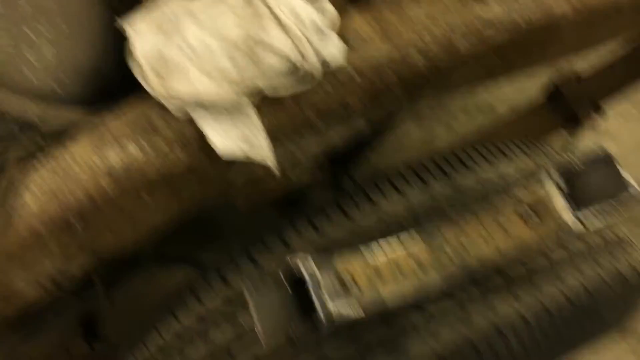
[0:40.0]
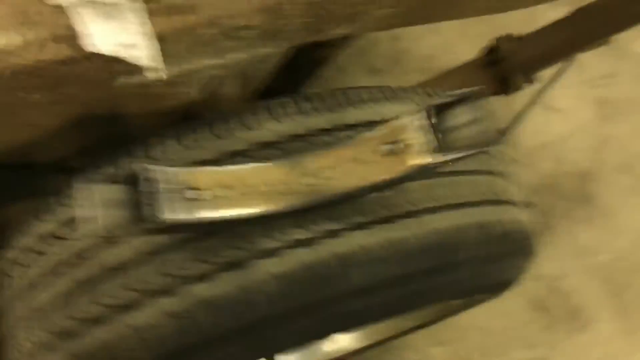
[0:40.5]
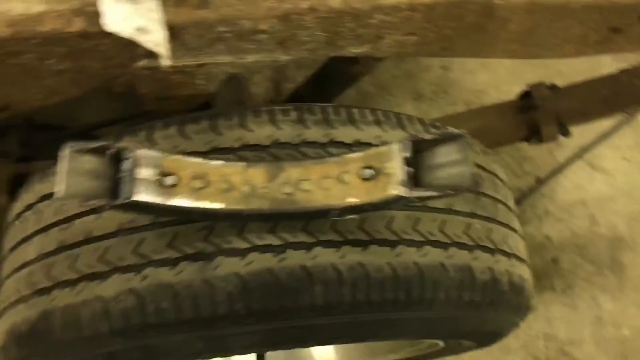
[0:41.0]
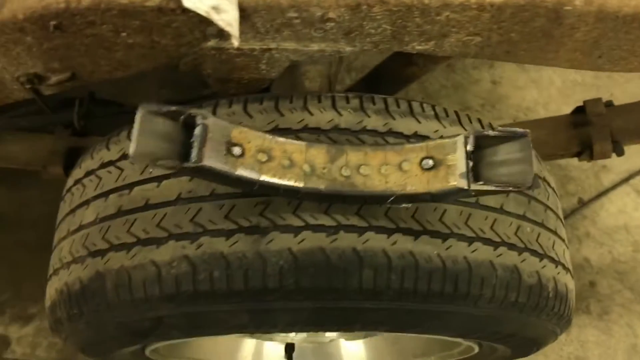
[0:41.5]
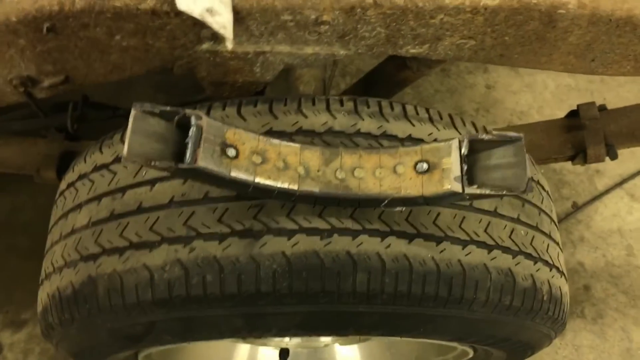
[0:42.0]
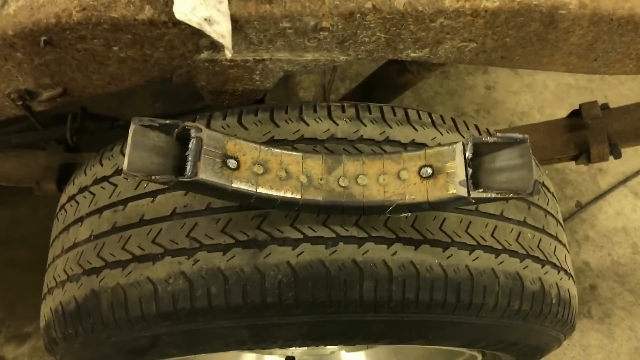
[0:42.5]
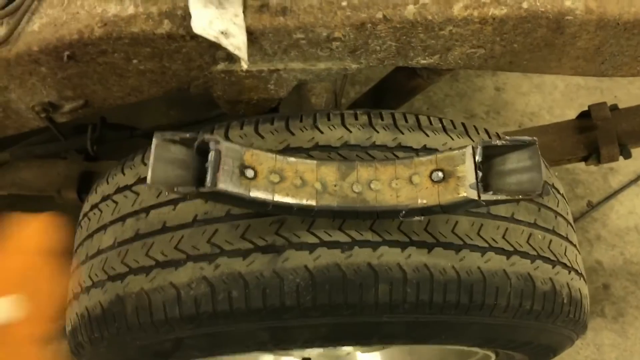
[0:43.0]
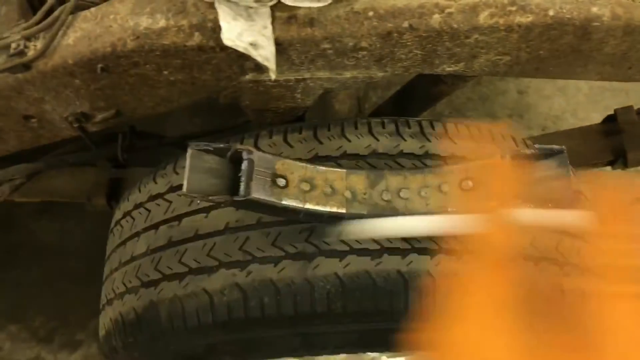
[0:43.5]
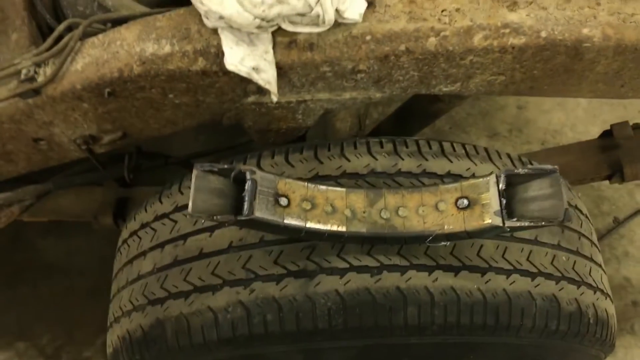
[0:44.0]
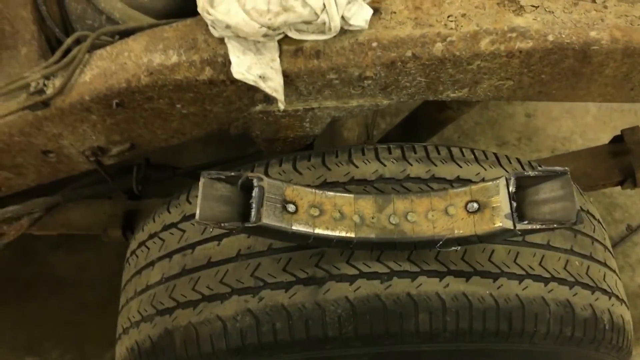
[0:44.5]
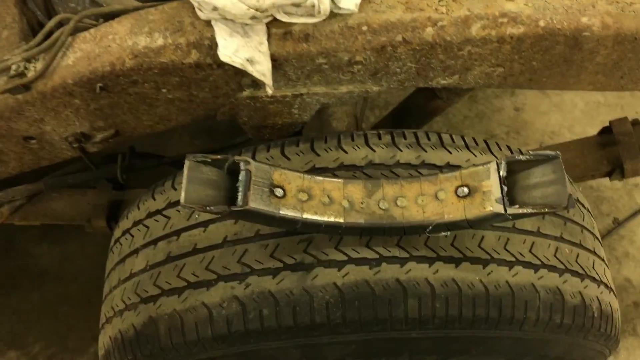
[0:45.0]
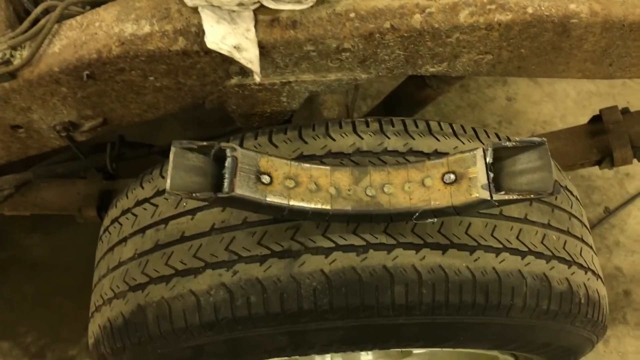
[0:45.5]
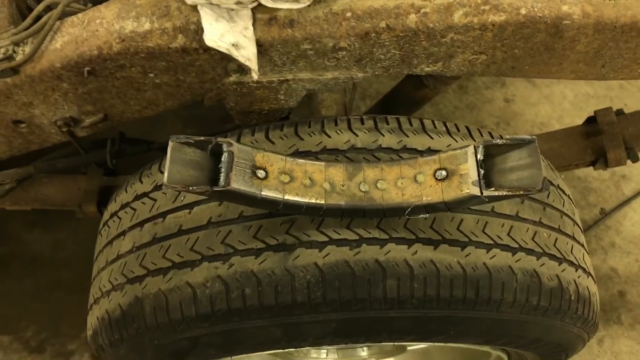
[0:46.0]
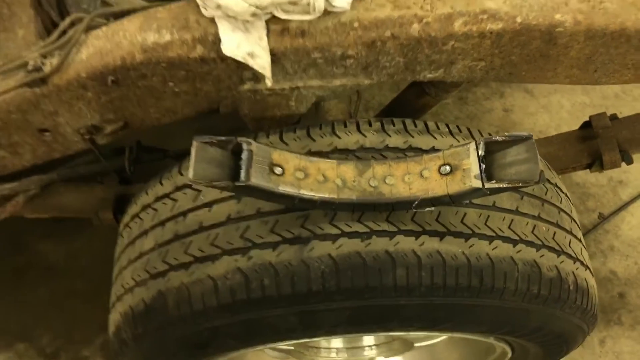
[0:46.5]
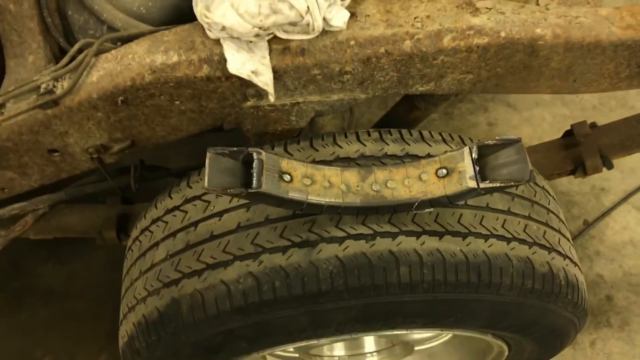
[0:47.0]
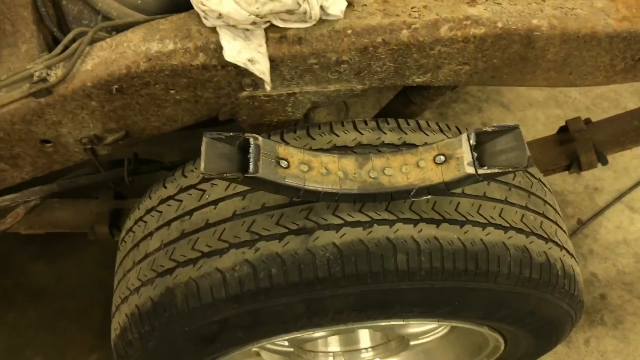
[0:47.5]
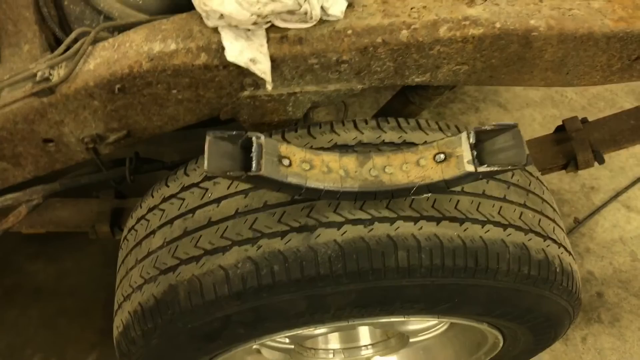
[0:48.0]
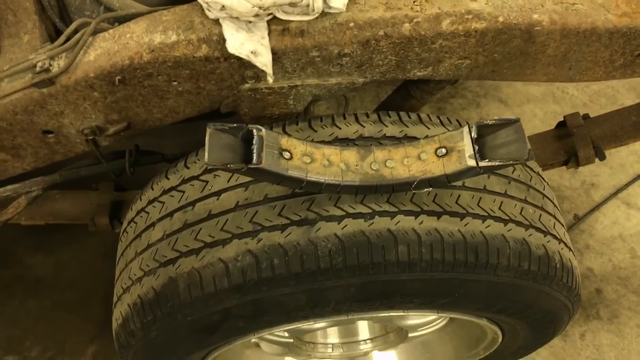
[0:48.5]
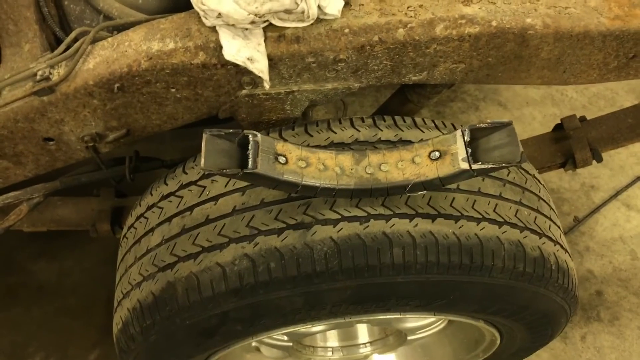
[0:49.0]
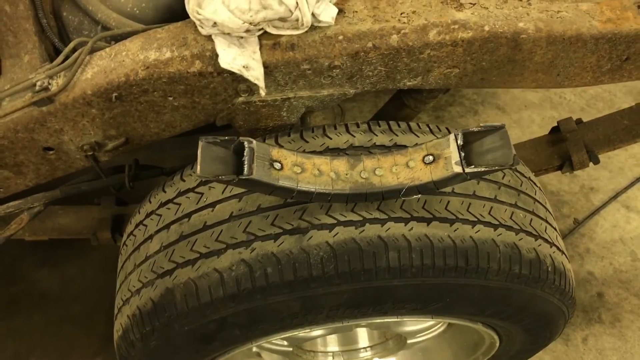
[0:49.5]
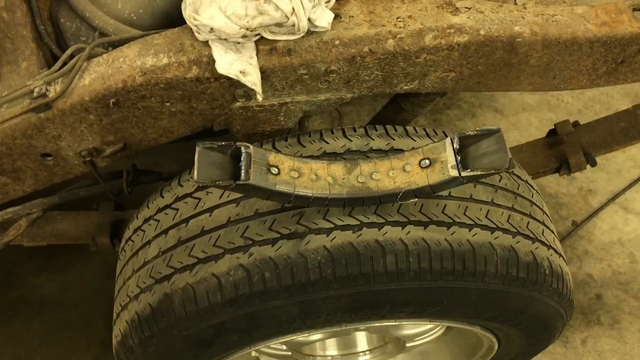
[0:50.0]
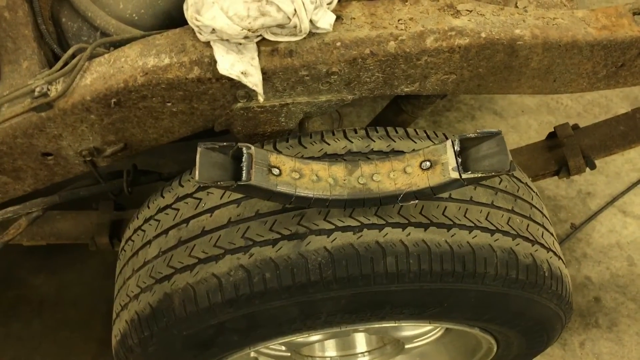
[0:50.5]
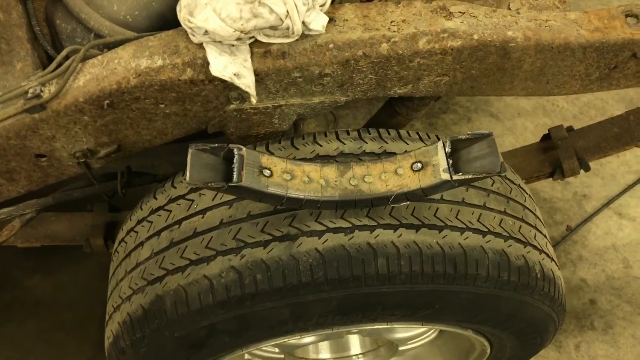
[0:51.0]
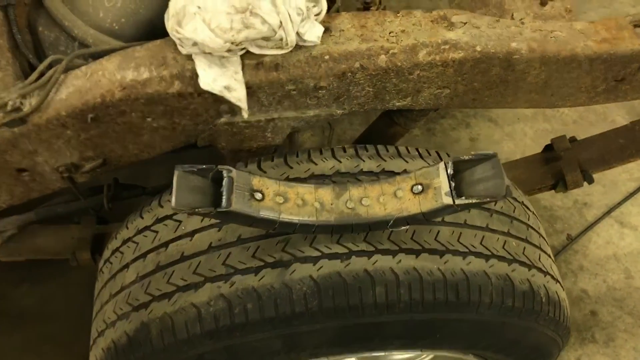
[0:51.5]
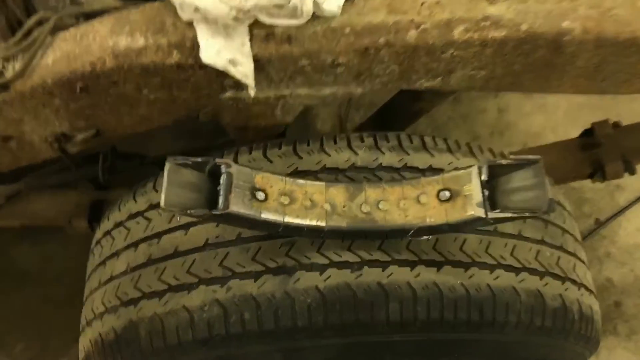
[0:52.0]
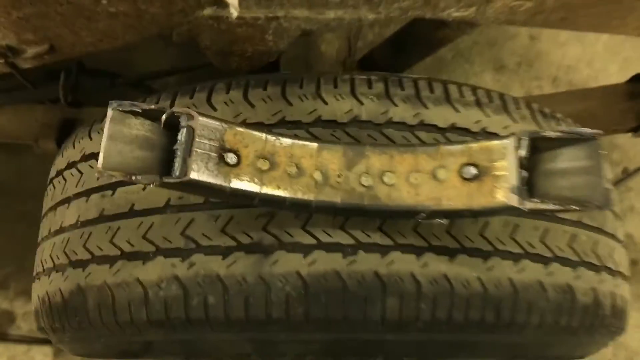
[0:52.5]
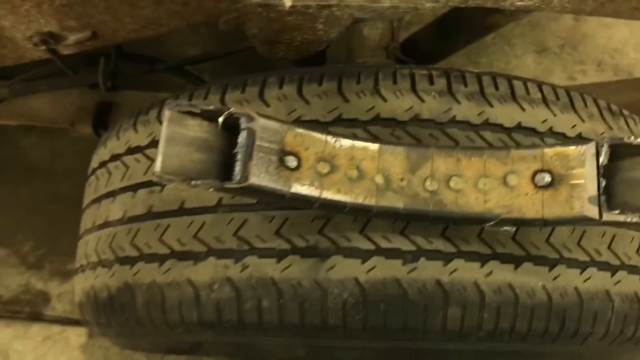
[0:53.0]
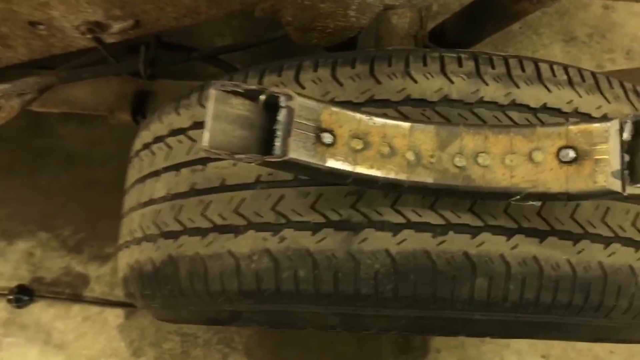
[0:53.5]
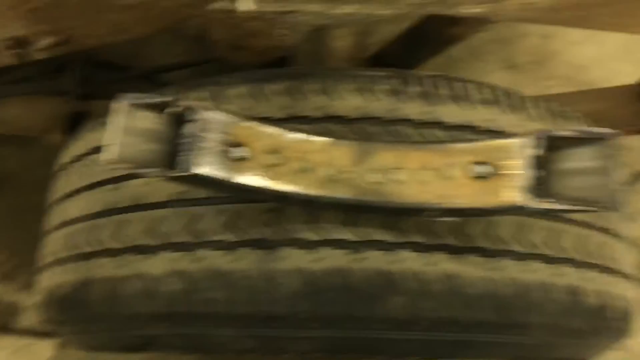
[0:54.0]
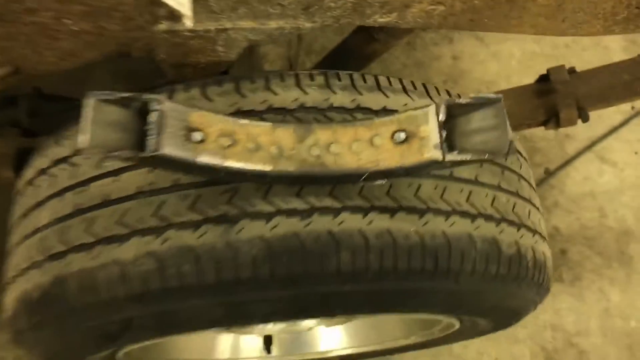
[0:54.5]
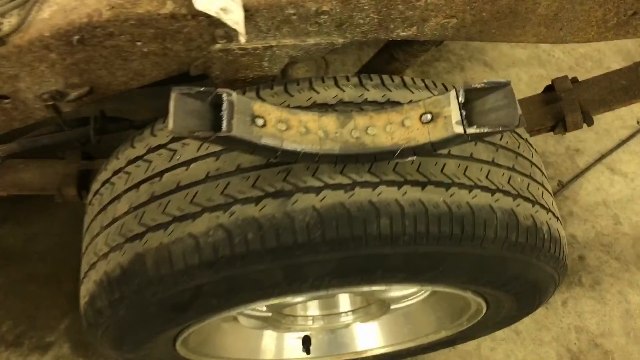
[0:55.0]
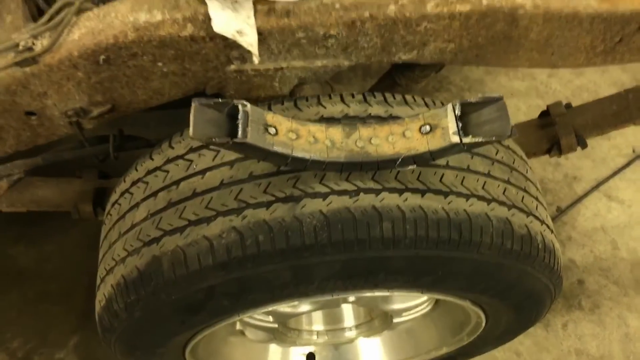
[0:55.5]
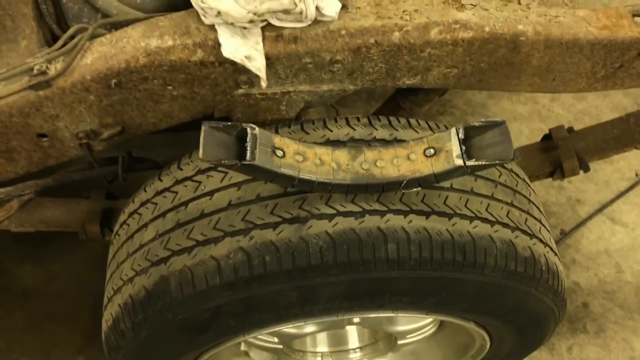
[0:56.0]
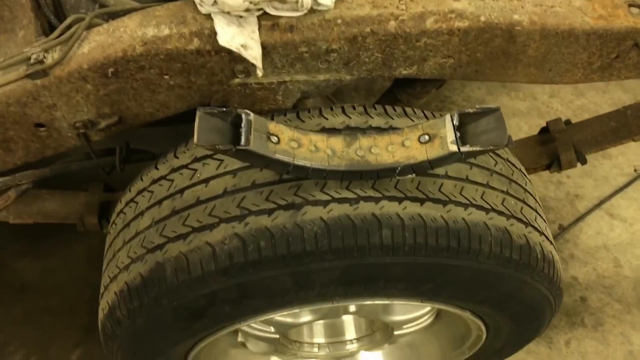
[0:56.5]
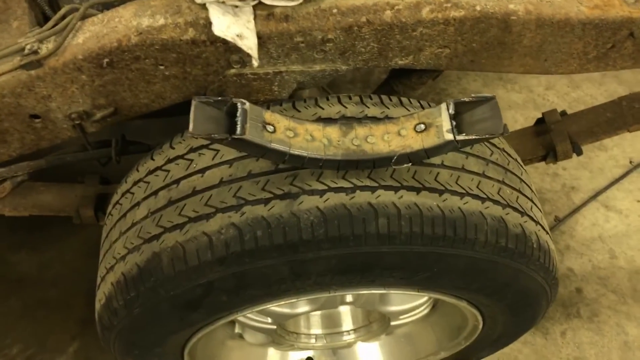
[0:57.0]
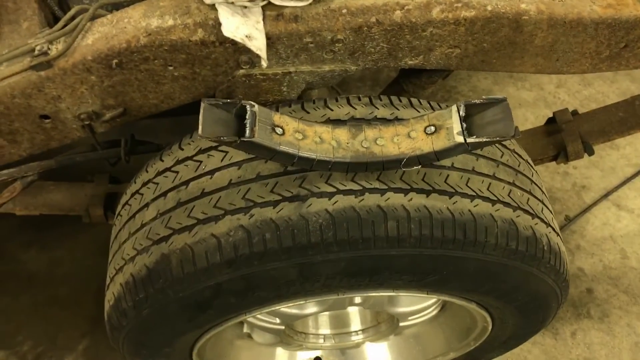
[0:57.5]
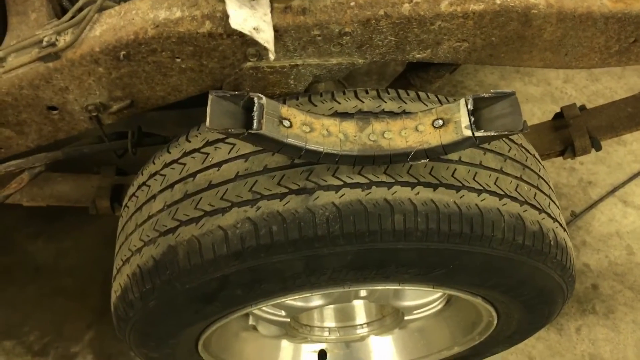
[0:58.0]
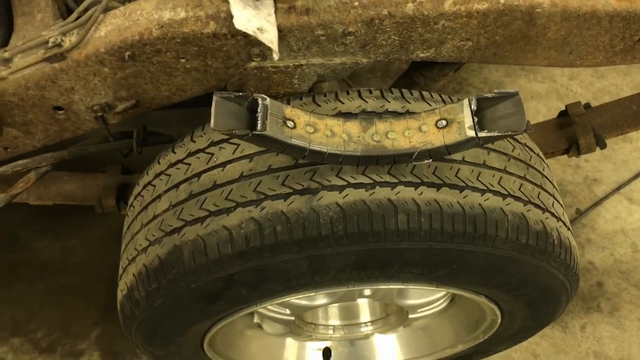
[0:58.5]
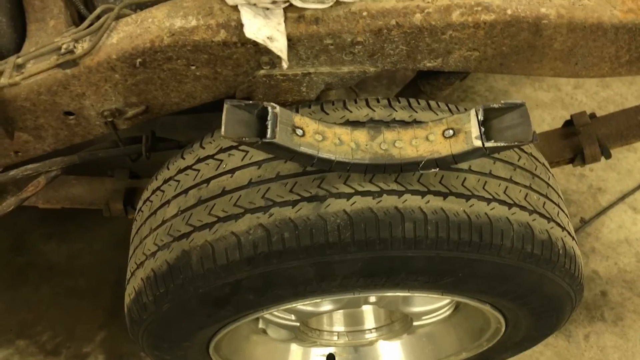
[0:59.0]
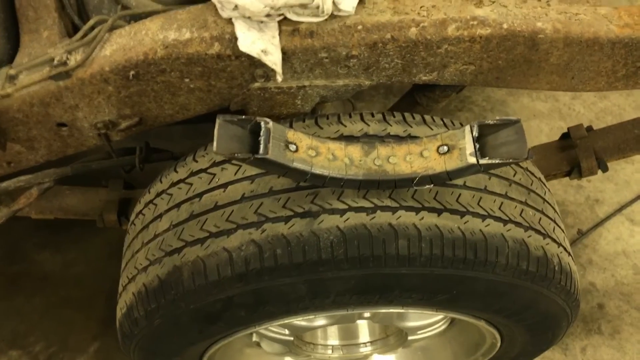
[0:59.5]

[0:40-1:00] The shot begins zoomed in on what is apparently a former truck bed area, down to its original bones, with no identifying marks, just inner workings resembling the undercarriage of a truck bed. Some type of item lies on top of a tire; it is curved, looks upside down, and sort of sways back and forth. It looks like it could have been a handle of some sort on an older vehicle. A hand passes quickly in front of the screen as if explaining something, and something white is visible in it that looks more like a cigarette than a tool or writing utensil. Some of the parts look corroded and possibly rusted out. The old white rag is still visible, but the main subject is the upside-down item on top of the tire.